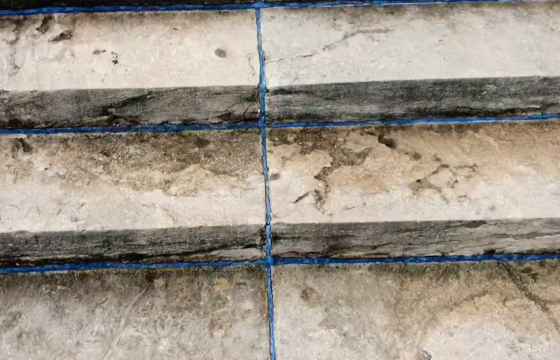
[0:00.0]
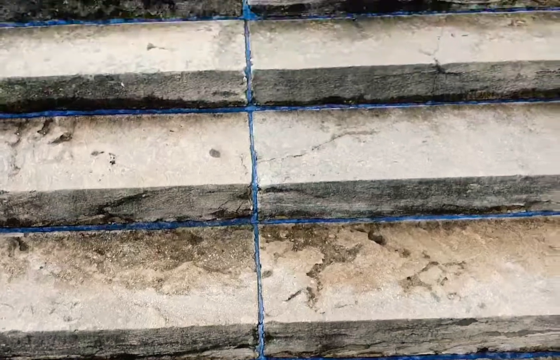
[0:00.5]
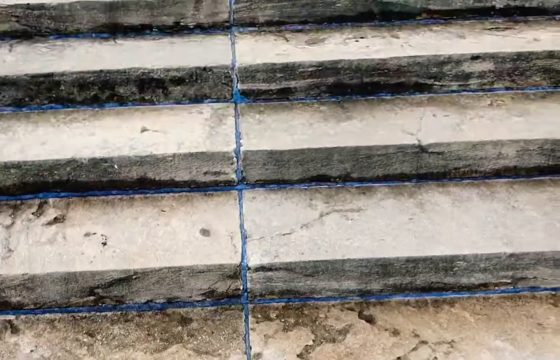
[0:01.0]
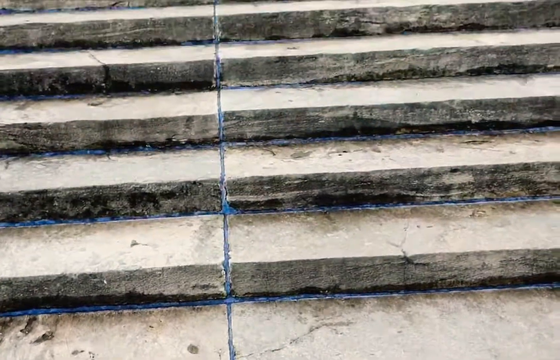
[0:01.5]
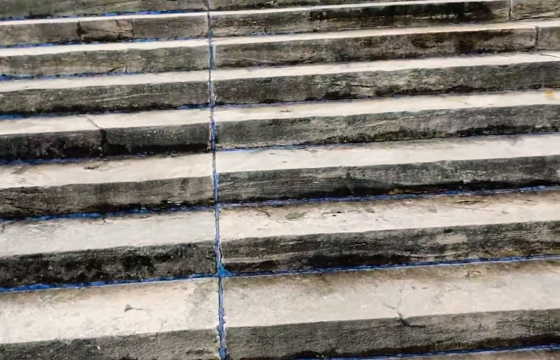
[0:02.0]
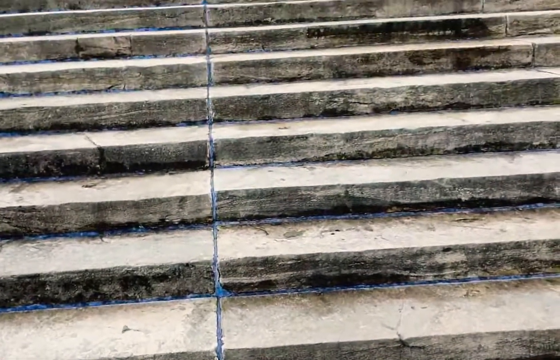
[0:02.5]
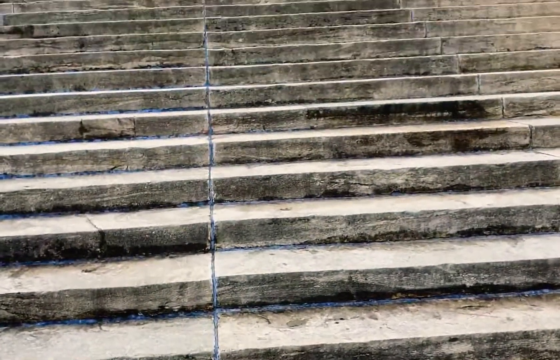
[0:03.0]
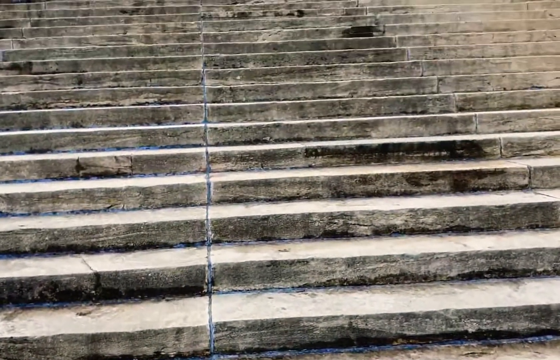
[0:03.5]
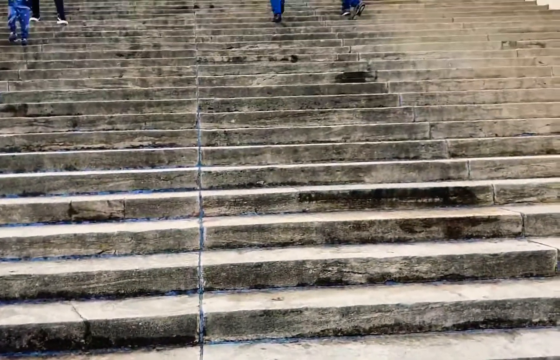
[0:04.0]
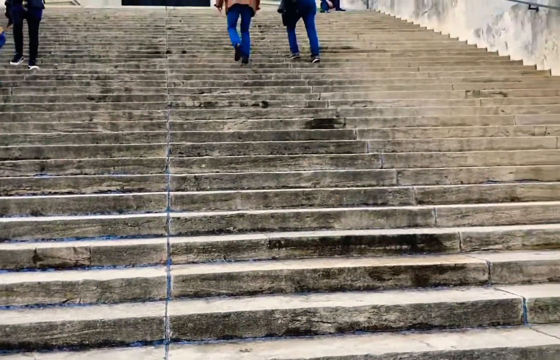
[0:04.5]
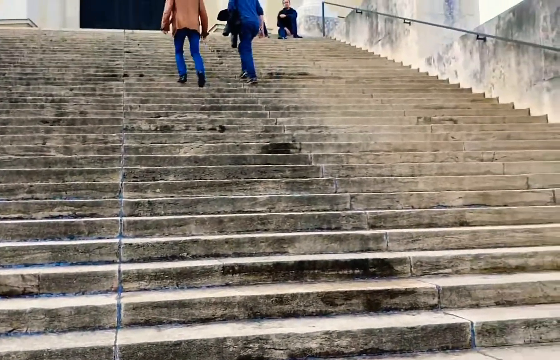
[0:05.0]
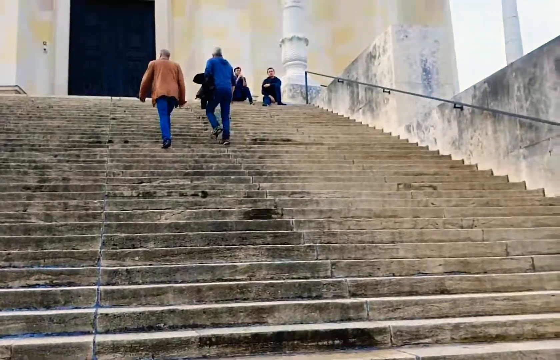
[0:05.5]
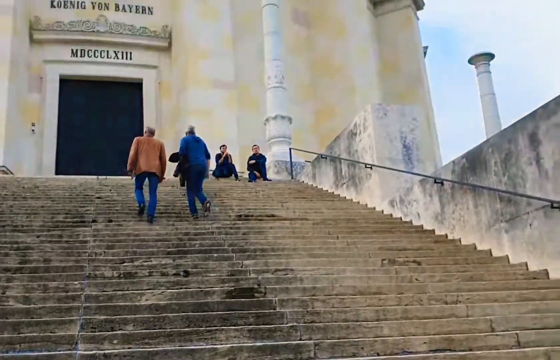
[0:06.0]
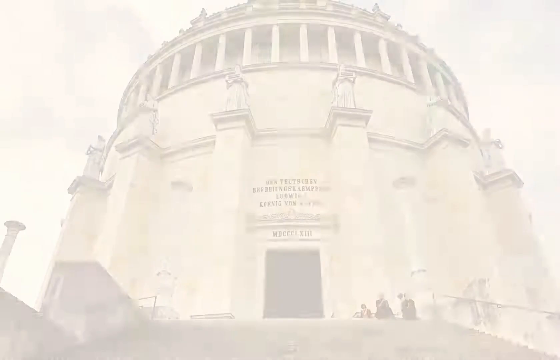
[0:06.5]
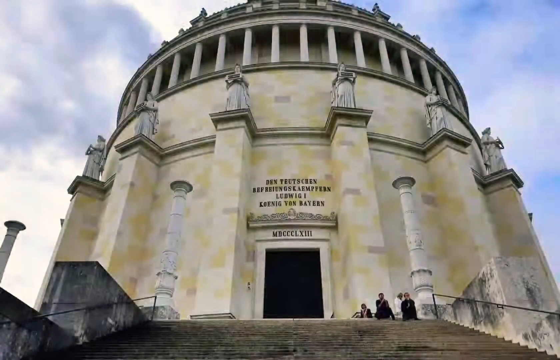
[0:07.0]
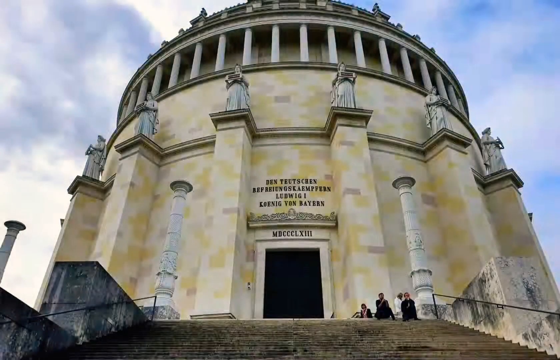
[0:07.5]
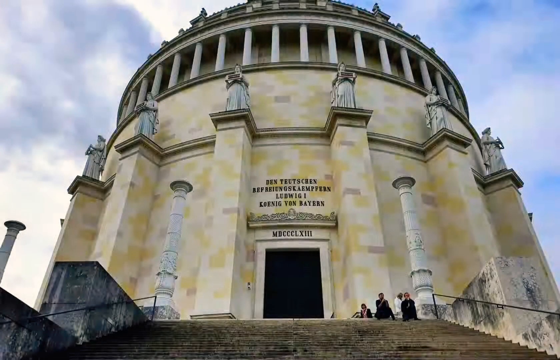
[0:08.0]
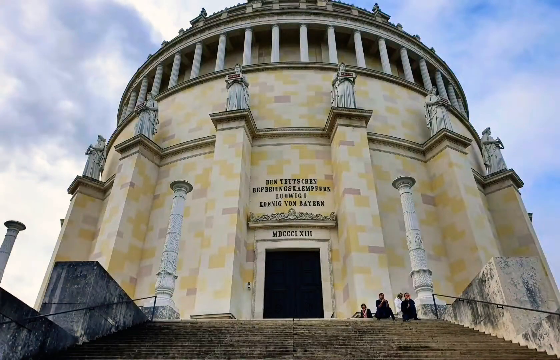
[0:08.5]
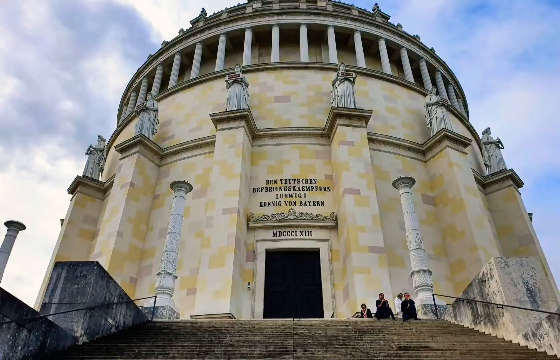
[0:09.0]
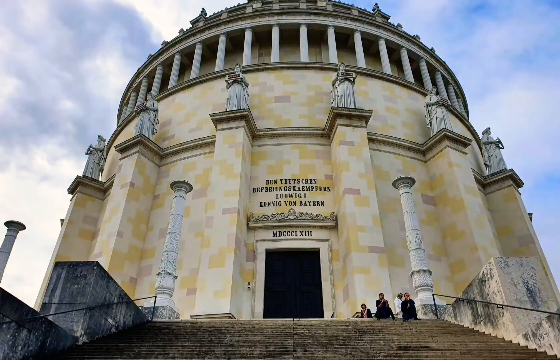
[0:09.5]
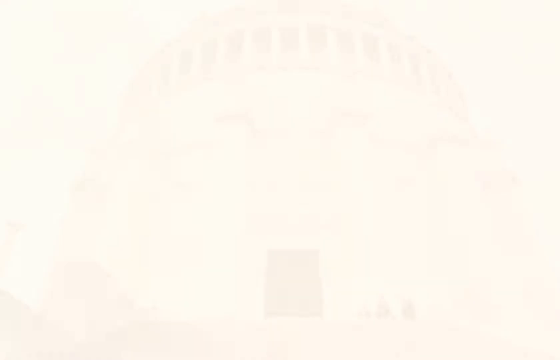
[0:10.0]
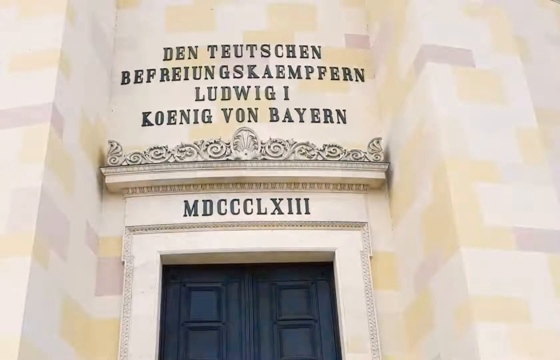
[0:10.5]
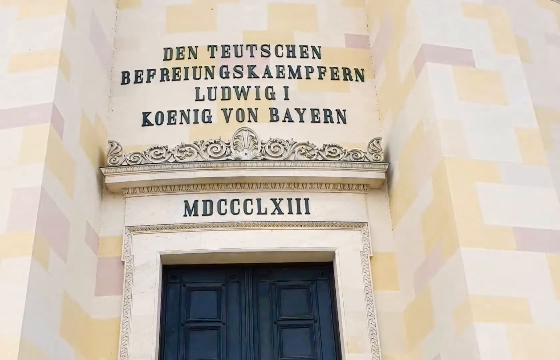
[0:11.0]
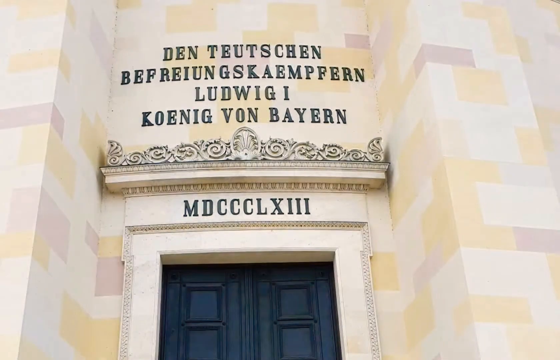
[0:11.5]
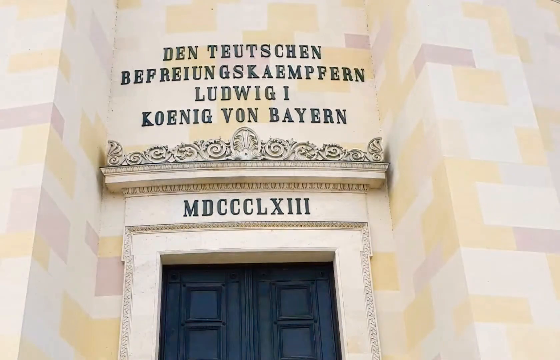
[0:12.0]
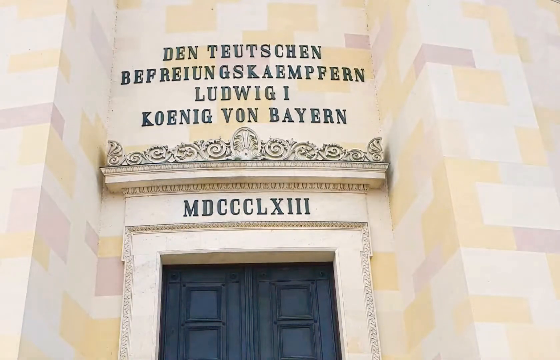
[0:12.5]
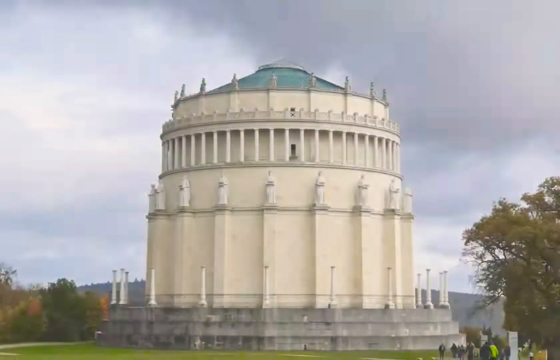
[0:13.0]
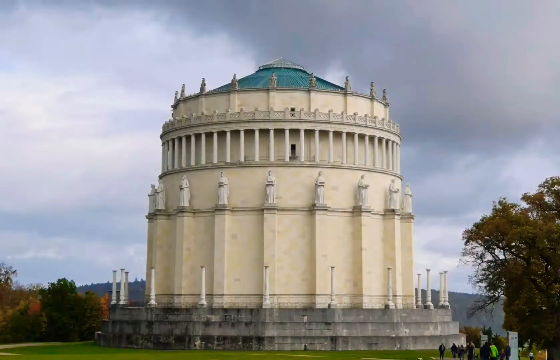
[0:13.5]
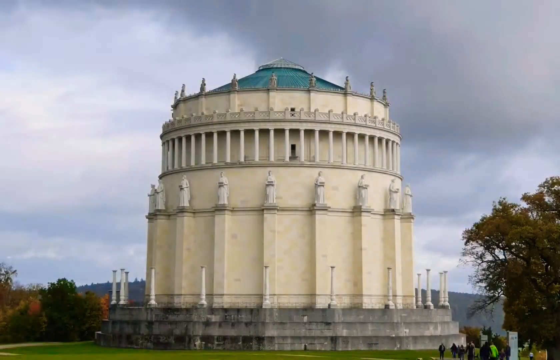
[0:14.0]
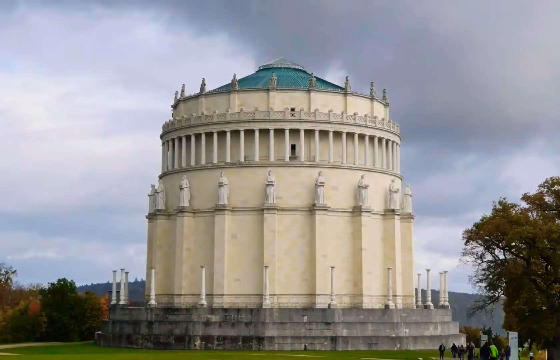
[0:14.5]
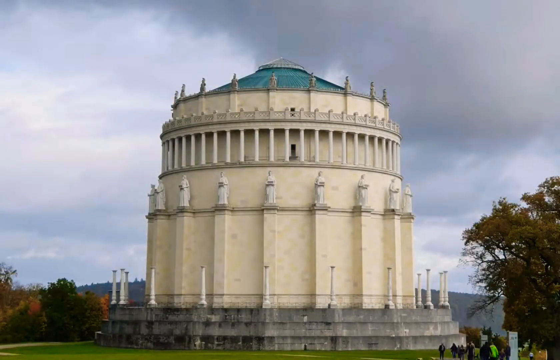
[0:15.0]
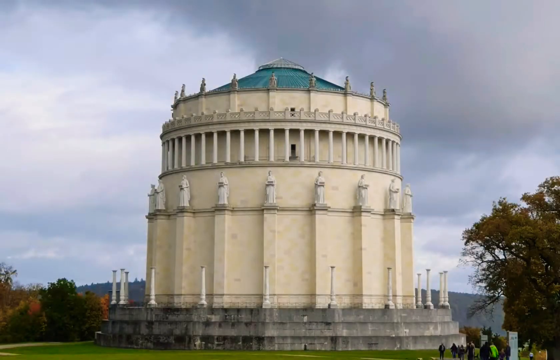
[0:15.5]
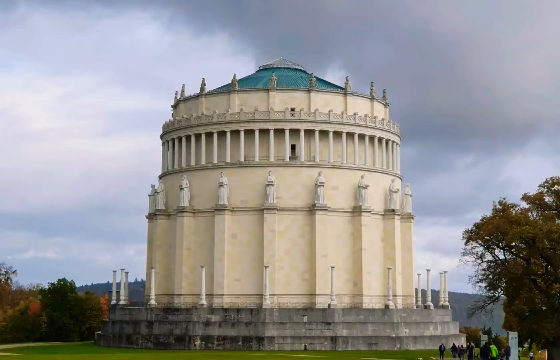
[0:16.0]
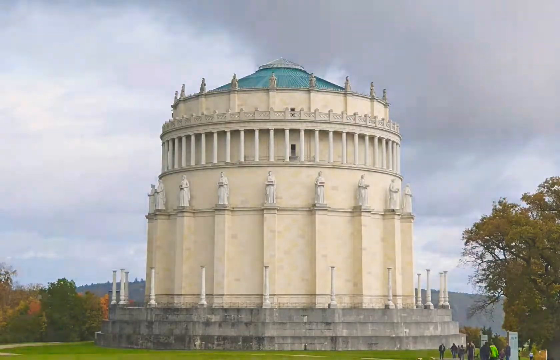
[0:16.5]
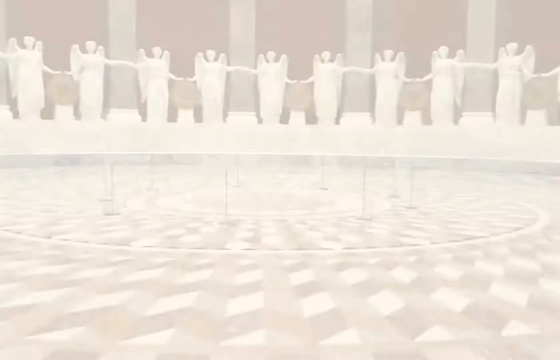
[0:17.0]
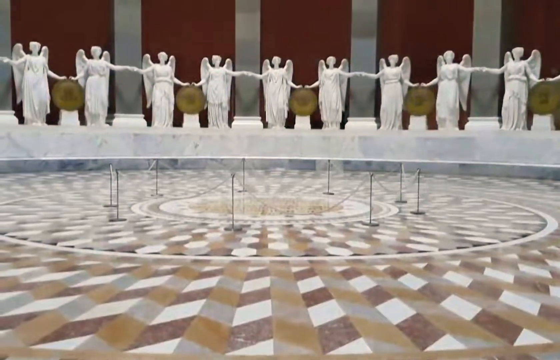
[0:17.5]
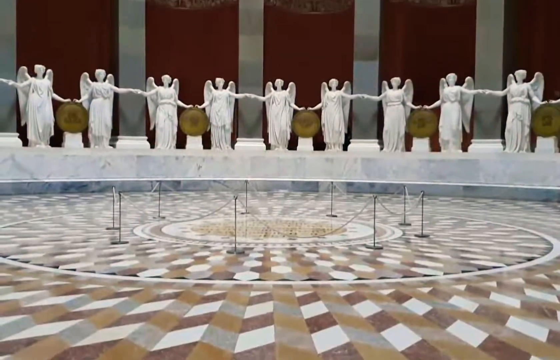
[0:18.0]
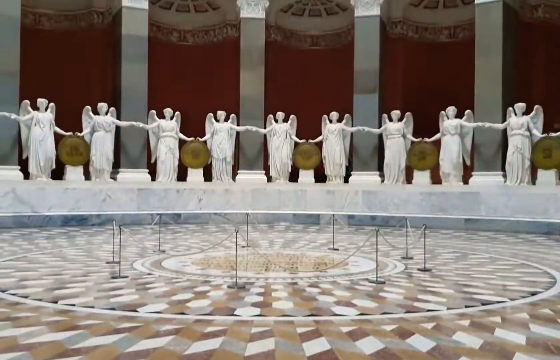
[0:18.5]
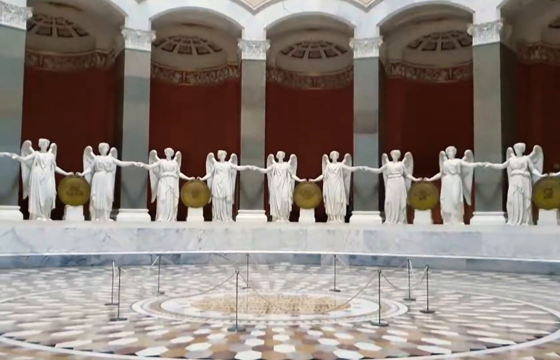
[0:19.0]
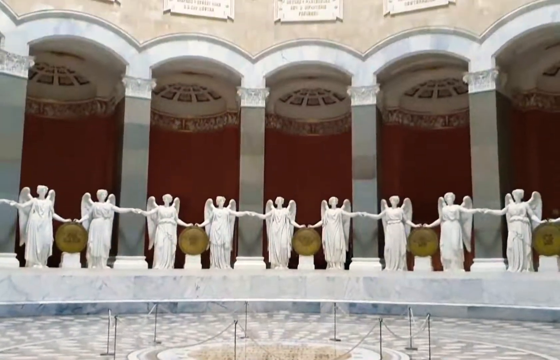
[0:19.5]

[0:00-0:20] Stone steps are shown in close-up; they seem to have a kind of blue grouting. They appear to lead up to some kind of large temple or ancient structure, though it is not clear what it is, and the exterior of the building is shown. The view then moves to the interior, where there is statuary of angels that seem to be holding hands. Back at the steps, the close-up is followed by a move upward over lots of little steps, and then the exterior of the building appears. It has a large dome look, almost like a capitol-type dome, but it is just the dome, with square pillars surrounding it. Statues on top of the pillars do not quite reach the top of the dome. Over the doorway there is lettering, possibly Roman, along with what look like Roman numerals, something like MBCC X 111; the text over it cannot be read. The exterior is a kind of yellowish brick. The view goes to a close-up of the doorway, then an exterior showing a green roof, then inside to the angels holding hands, and the camera starts to pan up to show some arches.